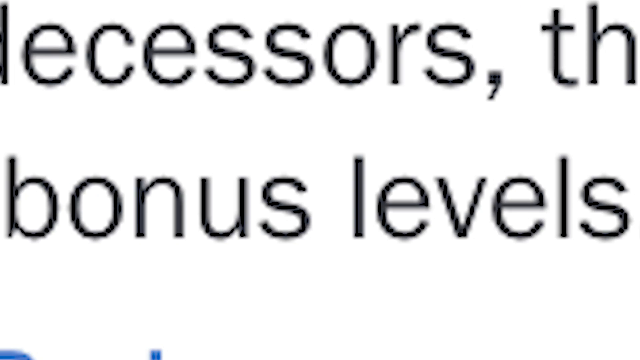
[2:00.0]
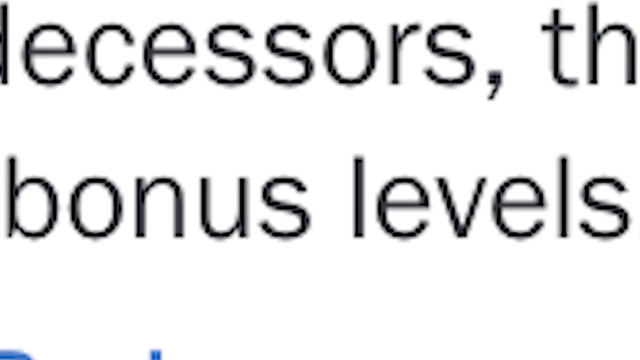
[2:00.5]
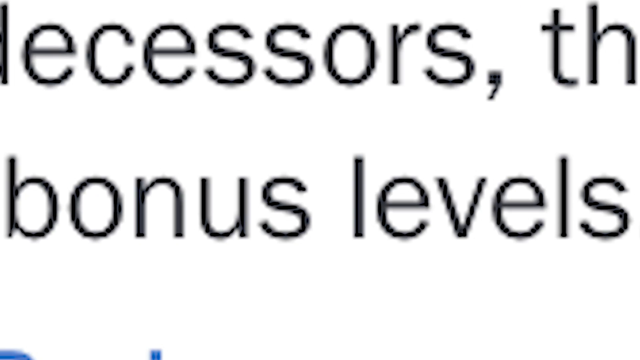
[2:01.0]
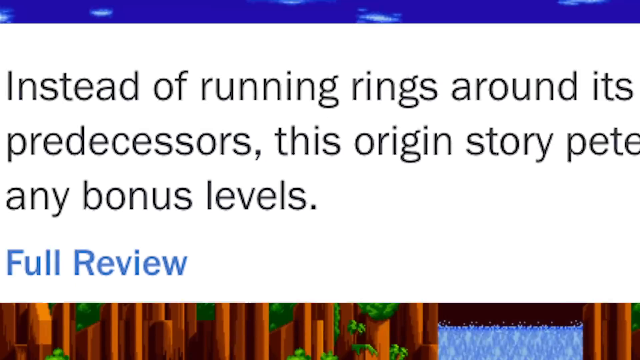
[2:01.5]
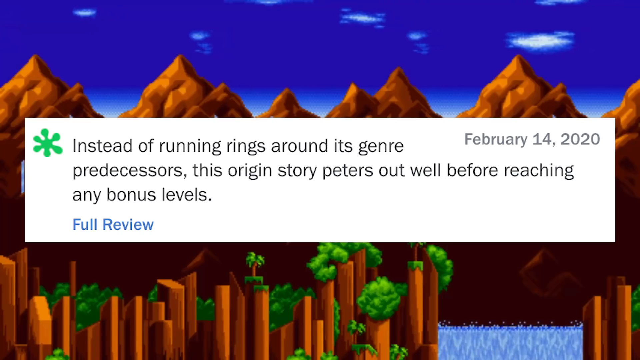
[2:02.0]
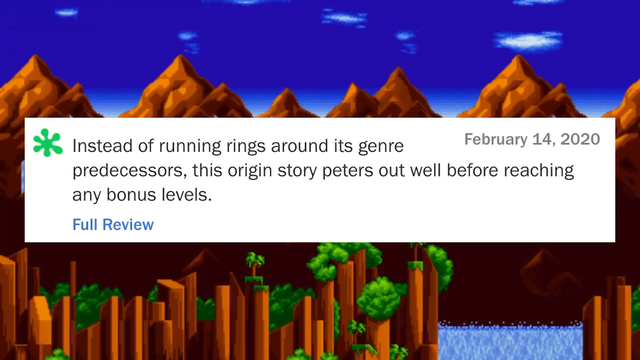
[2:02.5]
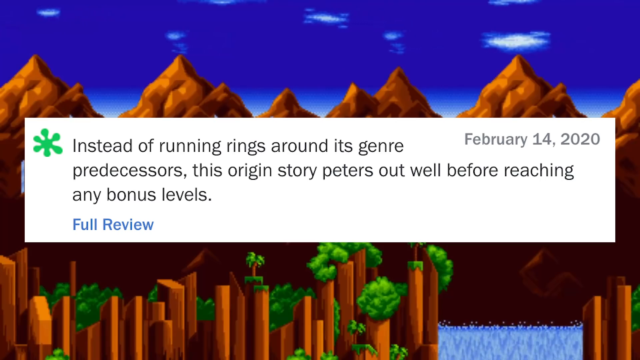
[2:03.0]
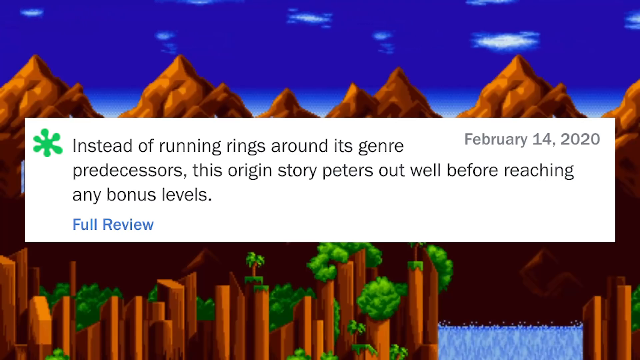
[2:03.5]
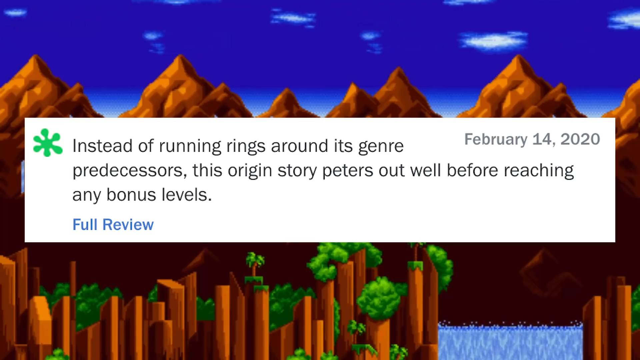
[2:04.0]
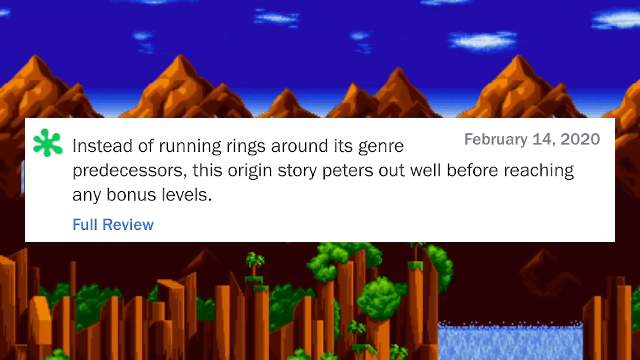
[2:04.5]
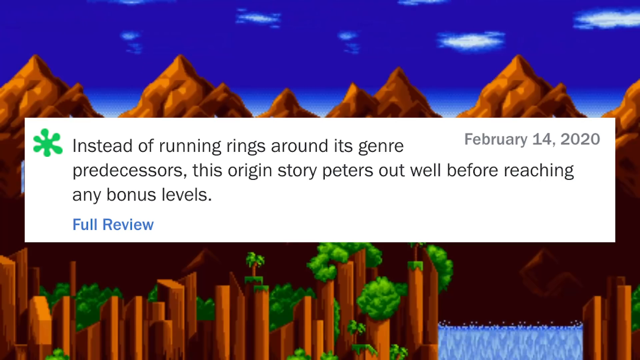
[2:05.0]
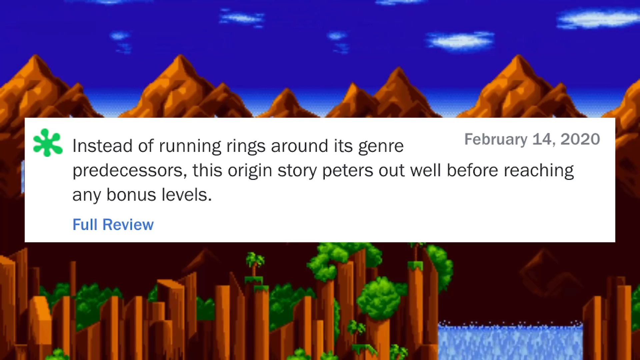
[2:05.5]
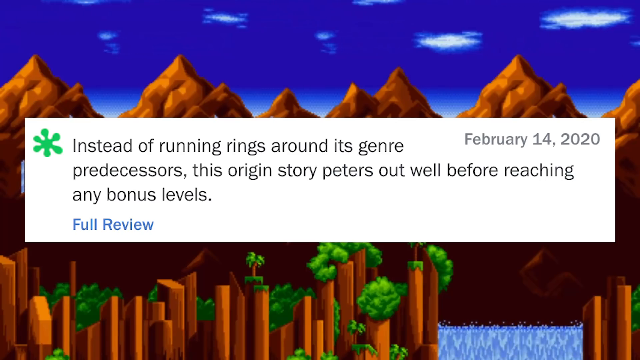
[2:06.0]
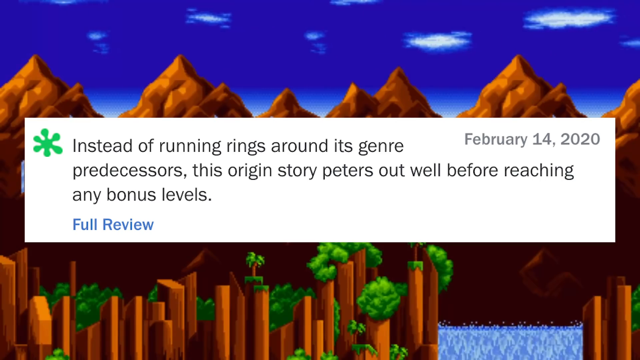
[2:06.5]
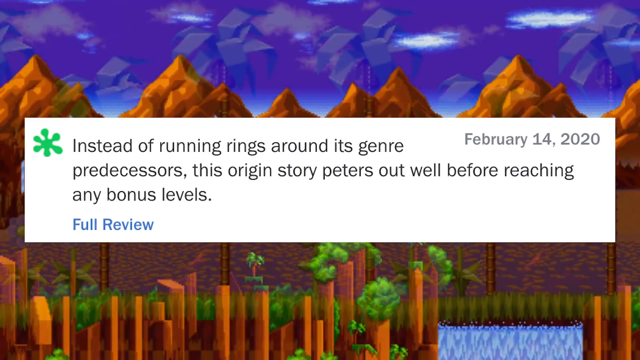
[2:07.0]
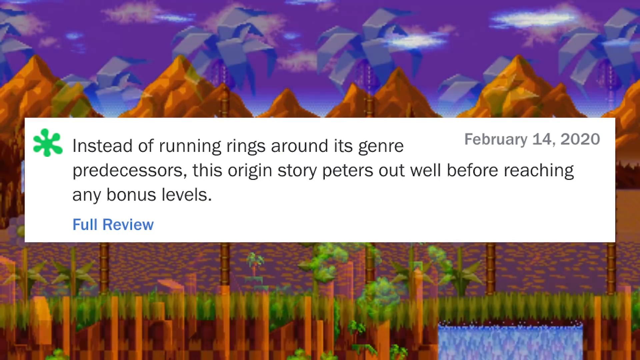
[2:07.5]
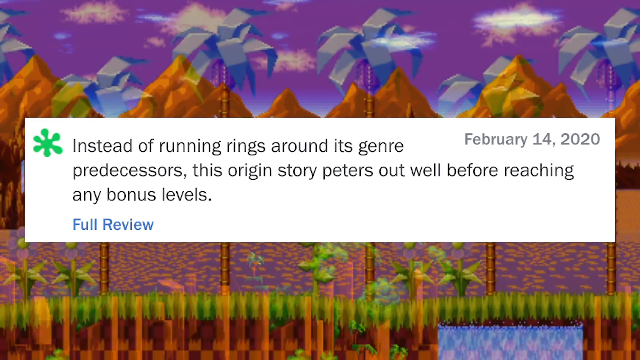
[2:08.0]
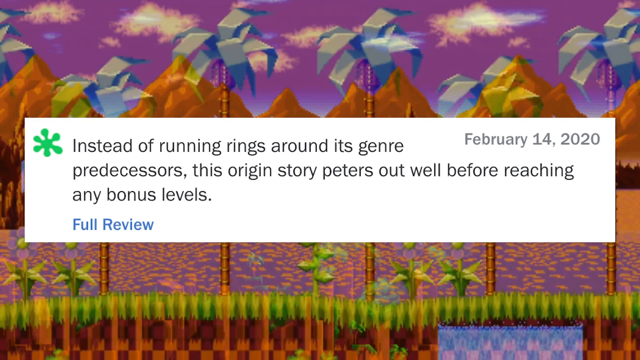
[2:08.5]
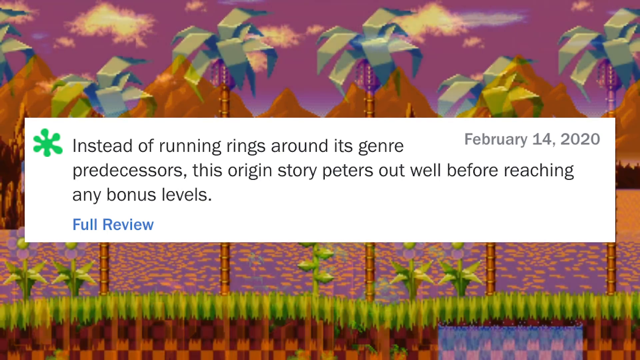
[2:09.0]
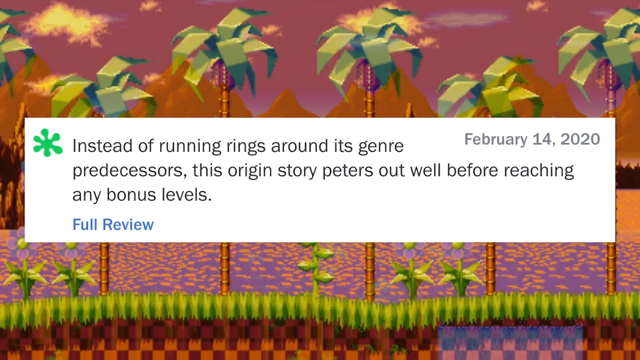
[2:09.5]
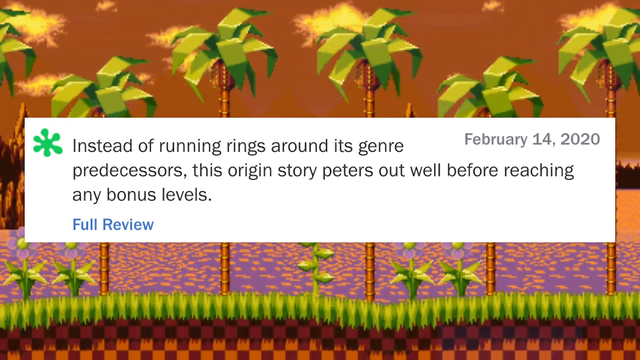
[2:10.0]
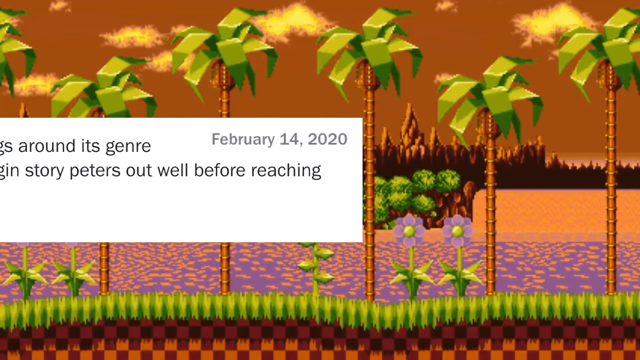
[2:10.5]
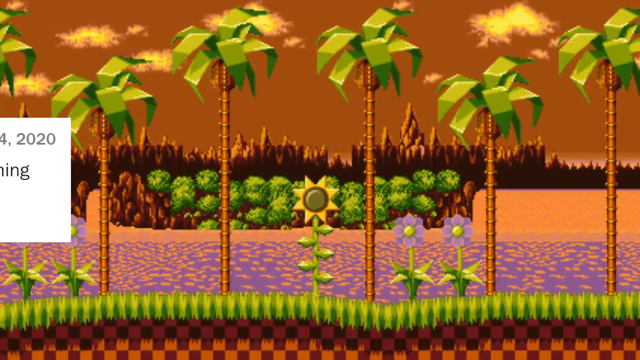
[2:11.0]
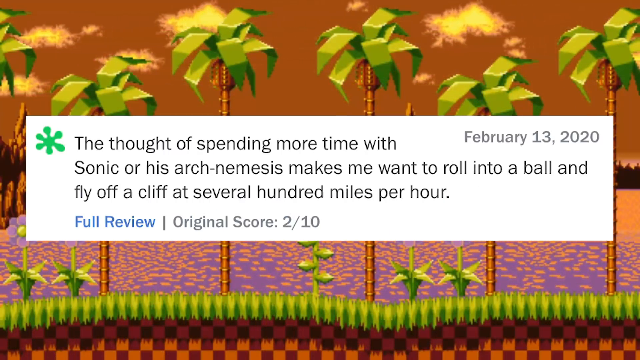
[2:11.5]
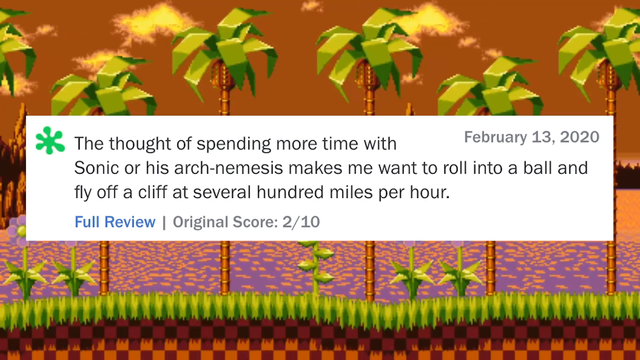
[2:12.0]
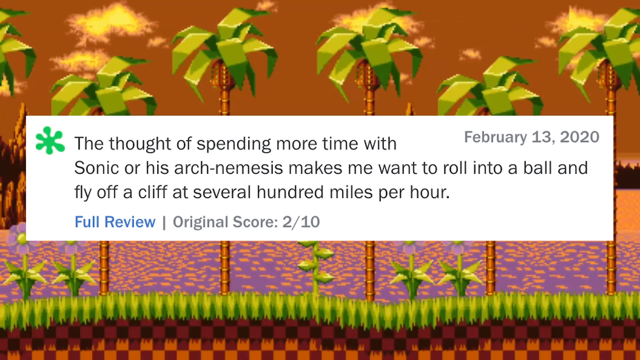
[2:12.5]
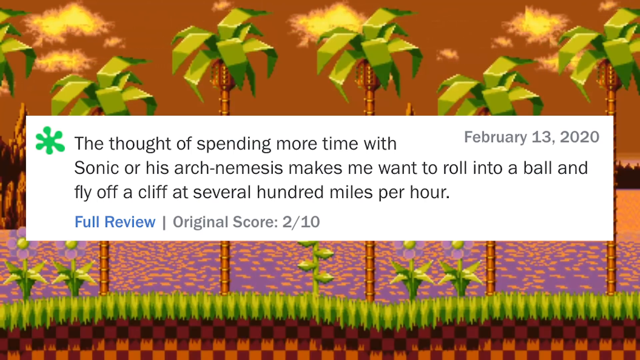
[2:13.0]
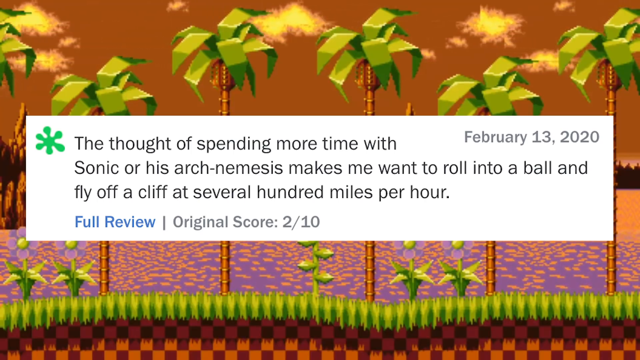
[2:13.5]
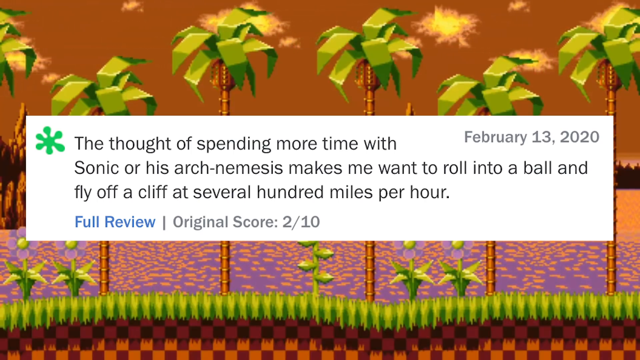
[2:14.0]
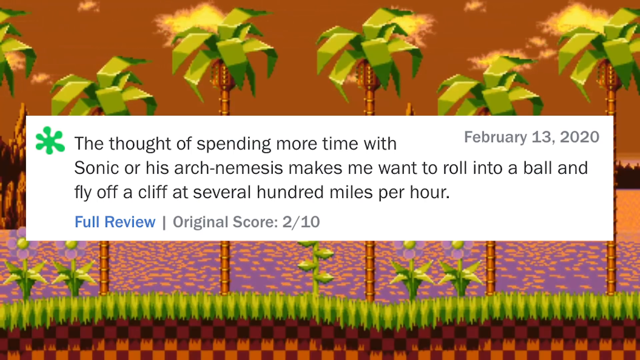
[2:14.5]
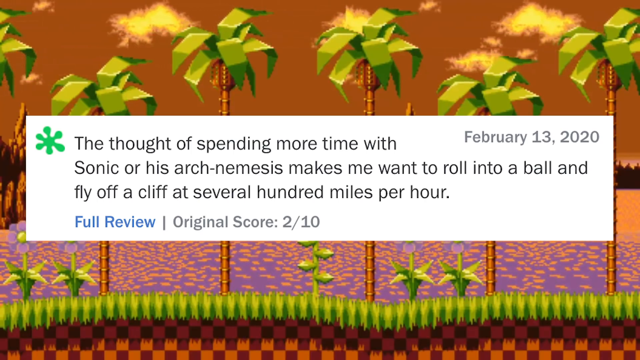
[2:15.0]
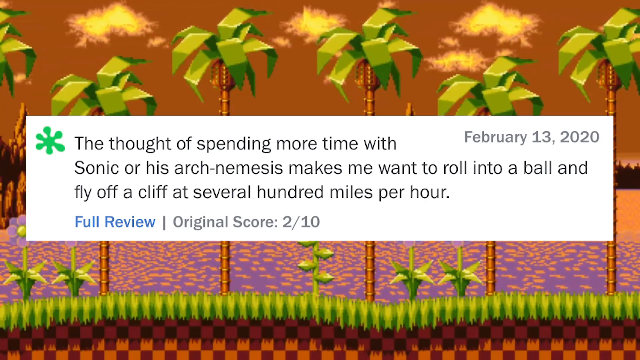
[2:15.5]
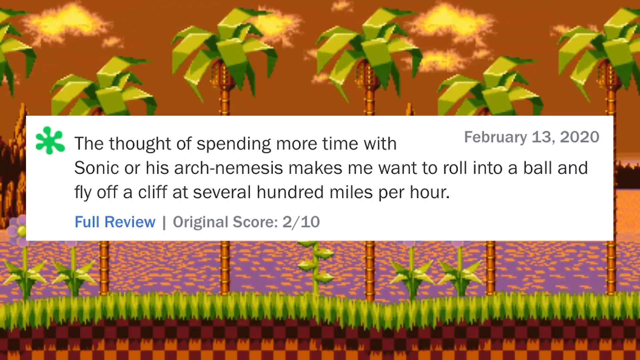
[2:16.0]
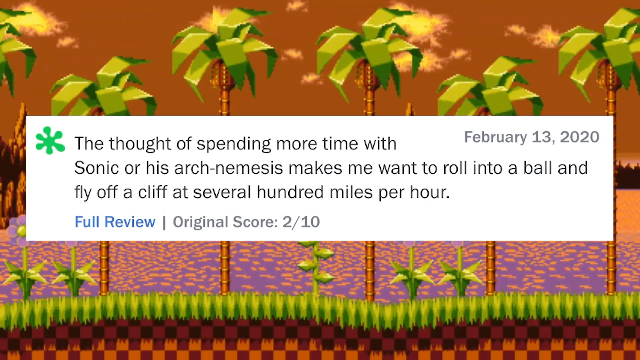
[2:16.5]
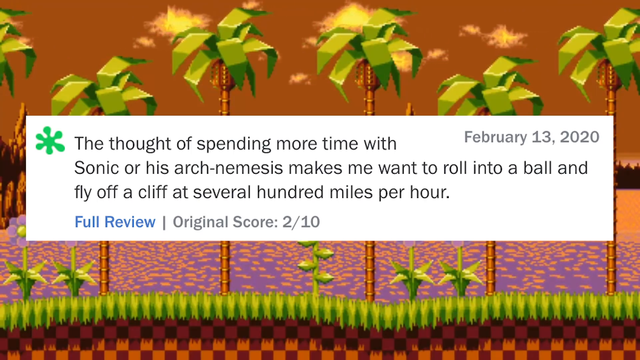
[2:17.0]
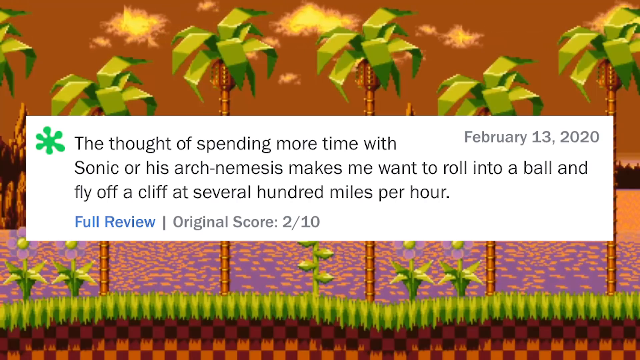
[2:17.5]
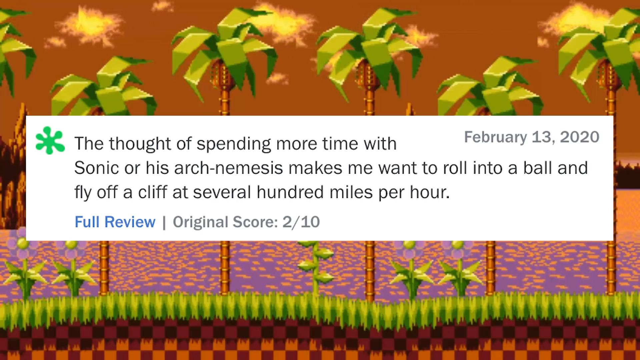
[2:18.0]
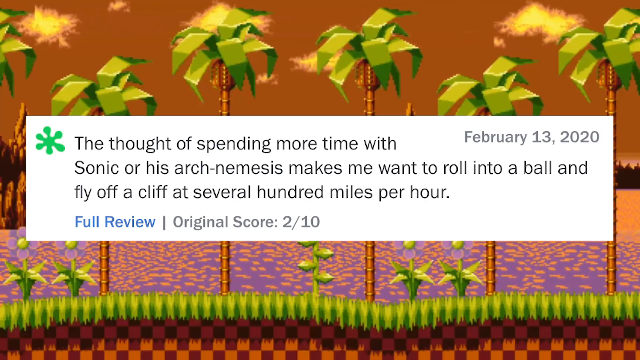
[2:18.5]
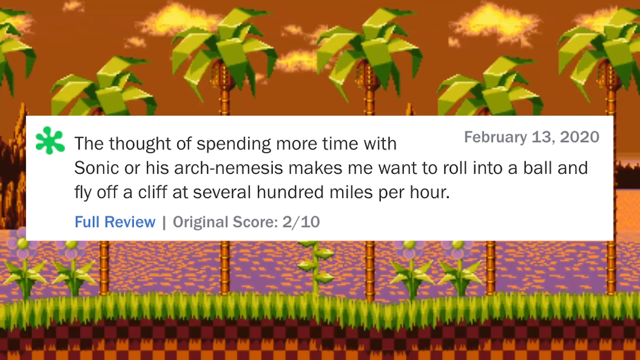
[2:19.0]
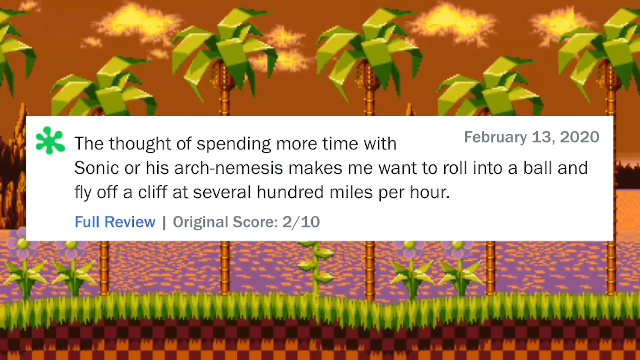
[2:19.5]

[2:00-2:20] The waterfall and mountains backdrop is unchanged, and then the video moves to another backdrop dominated by palm trees. It is still very basic pixel animation, with palm trees, some tropical shrubs, grass and a waterway with a dappled sunlight effect. The sky is golden rather than blue, seemingly meant to be either dawn or dusk. The wispy clouds are still moving across the screen. The next review is a 2 out of 10 and states: "The thought of spending more time with Sonic or his arch nemesis makes me want to roll into a ball and fly off a cliff at several hundred miles per hour."